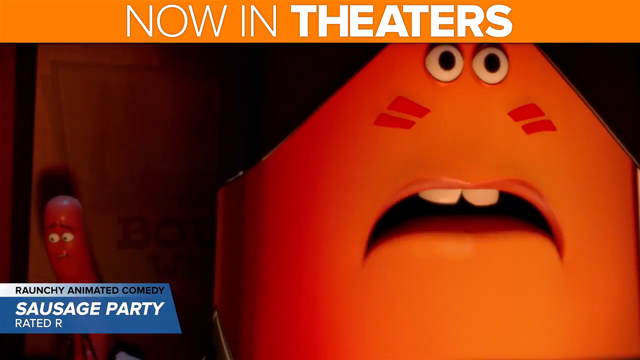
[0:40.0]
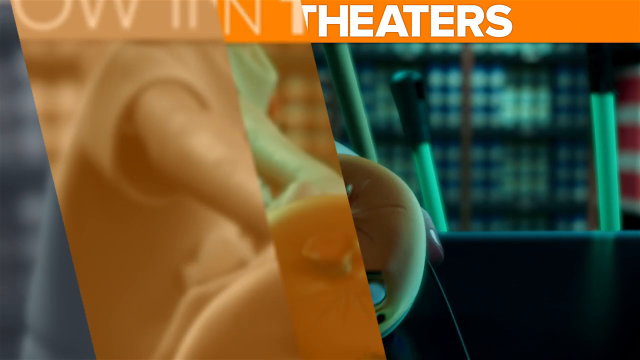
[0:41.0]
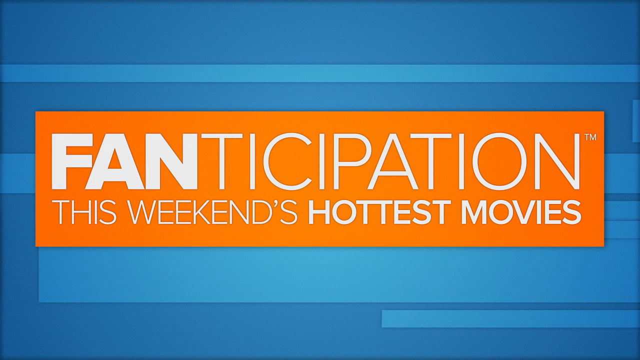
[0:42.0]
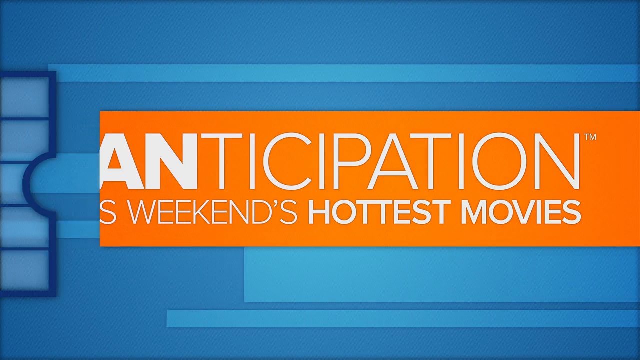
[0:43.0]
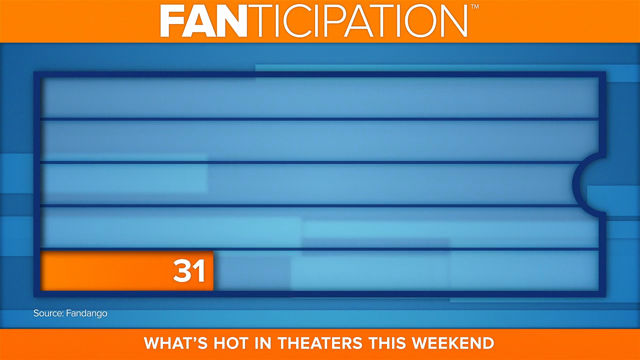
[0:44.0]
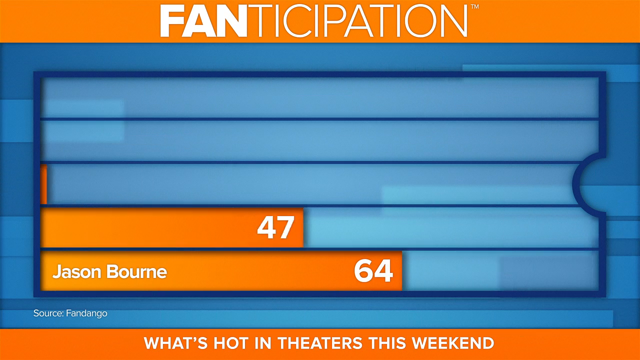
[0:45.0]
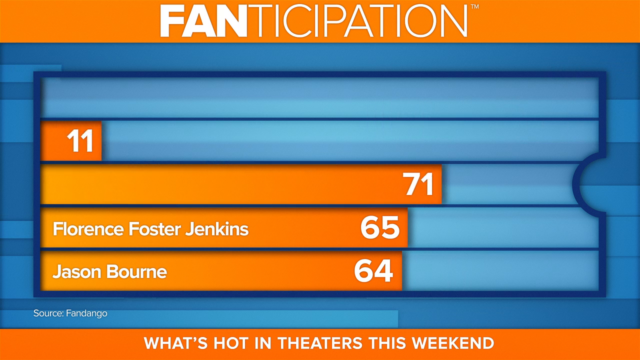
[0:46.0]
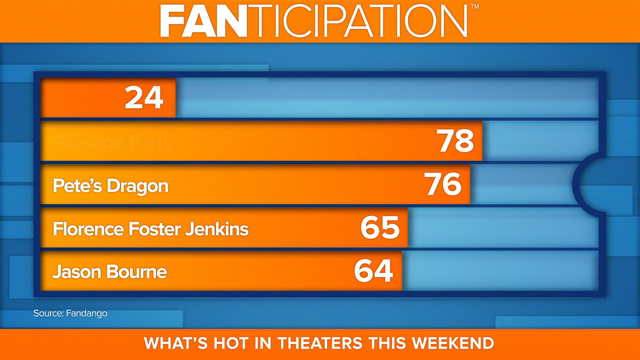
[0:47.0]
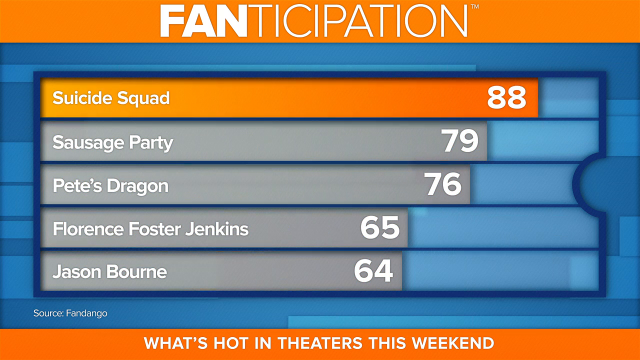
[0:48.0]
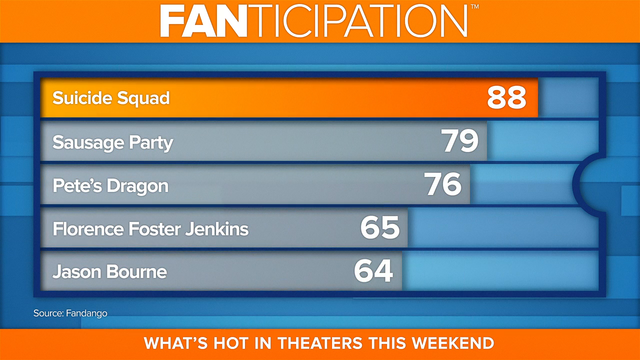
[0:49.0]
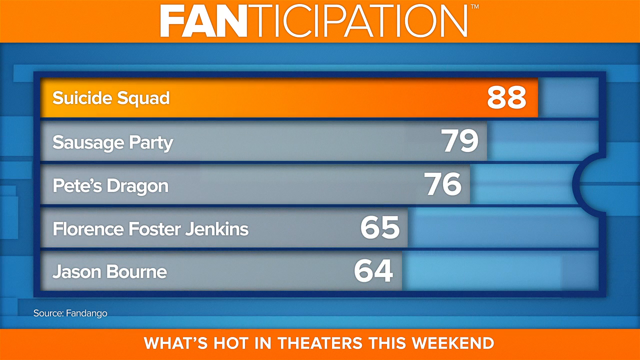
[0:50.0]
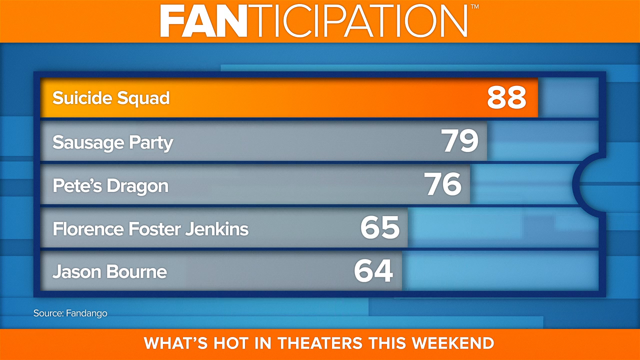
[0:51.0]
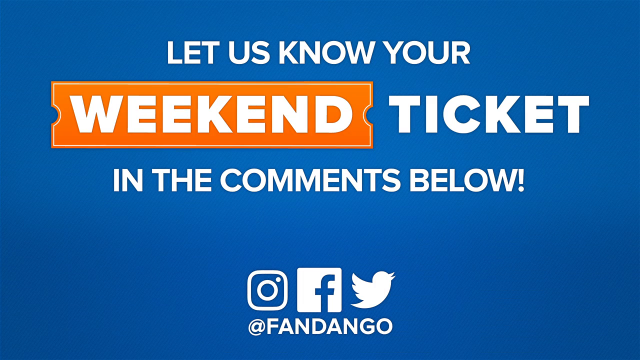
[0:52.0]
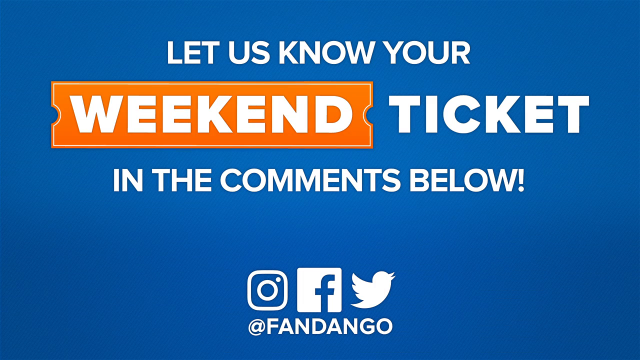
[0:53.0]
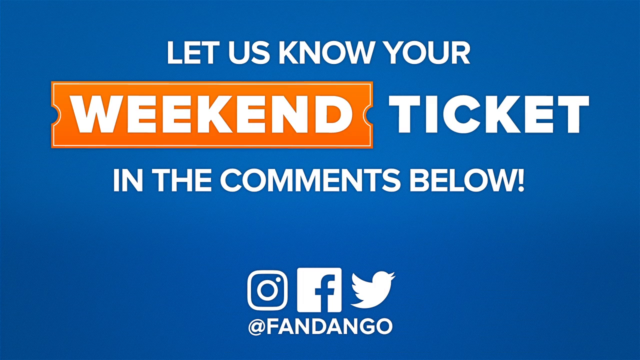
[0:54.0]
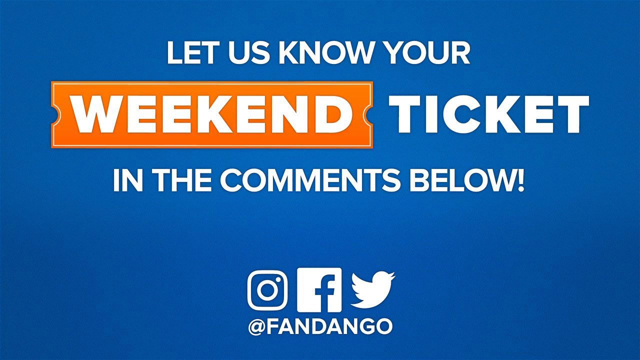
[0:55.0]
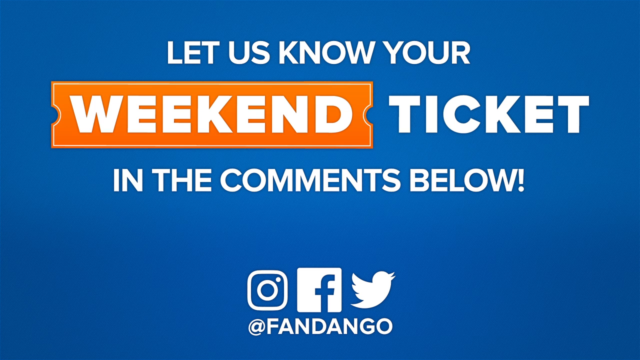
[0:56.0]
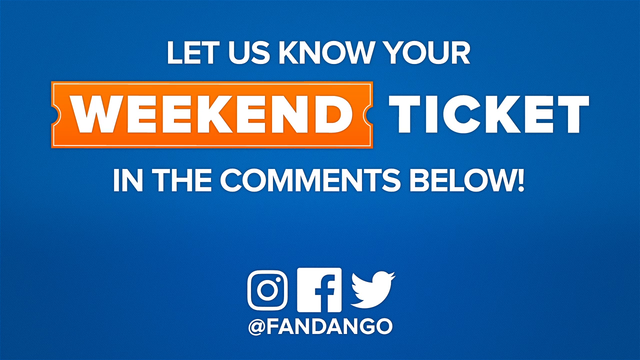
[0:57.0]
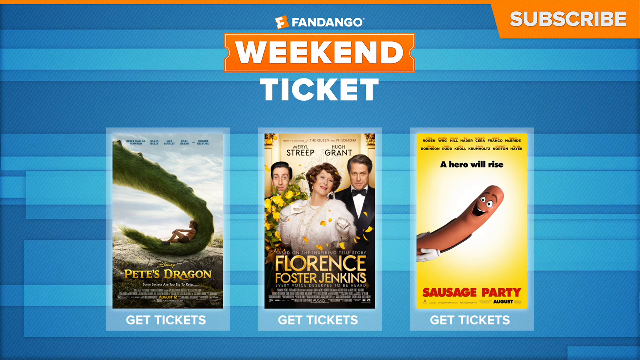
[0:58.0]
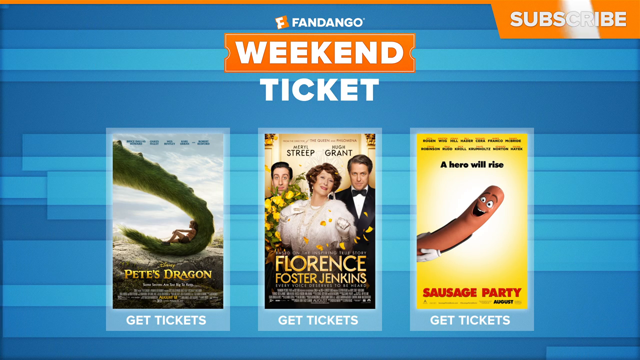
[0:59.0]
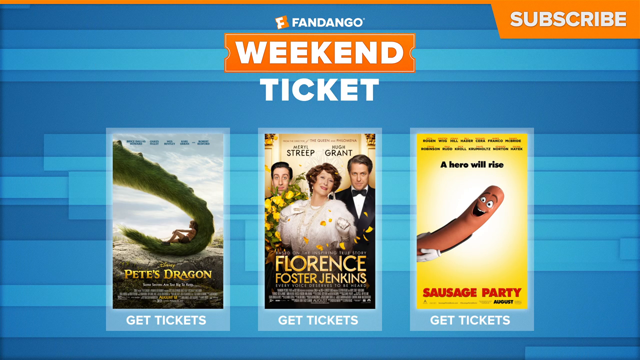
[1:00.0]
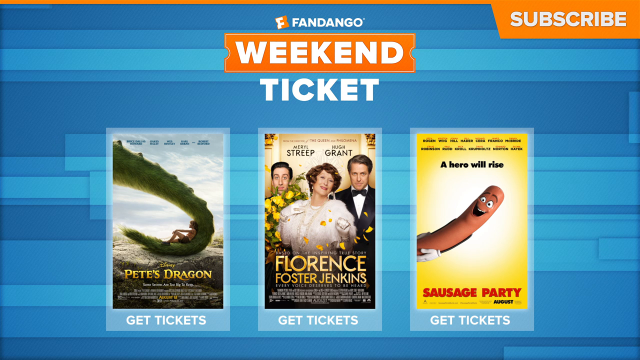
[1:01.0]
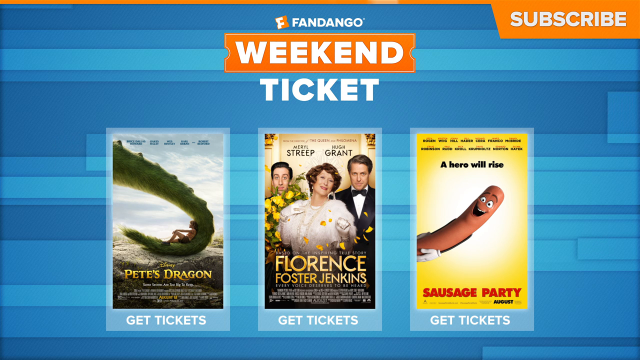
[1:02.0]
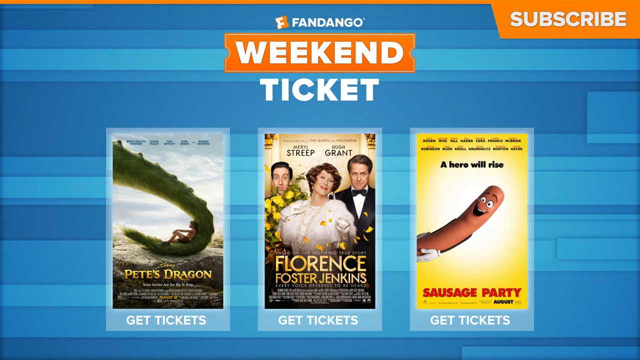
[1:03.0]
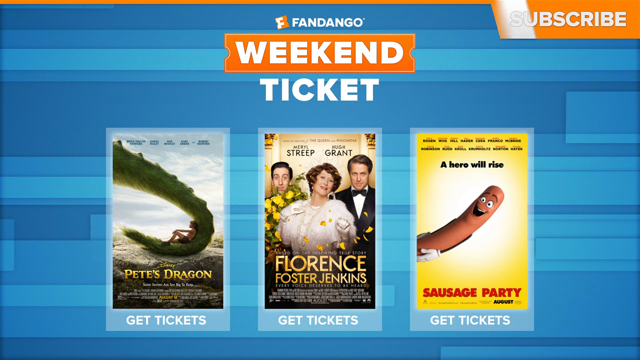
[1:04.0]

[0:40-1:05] Something that looks like a playlist of movies appears. At the top it says "a Fanticipation." The first movie listed is "Suicide Squad," the second "Sausage Party," the third "Pete's Dragon," the fourth "Florence Foster Jenkins," and the last "Jason Bourne." At the bottom it says "what's hot in the theaters." It appears to be a list of movies showing in theaters, and the video seems to be an advertisement, since at the end it says "weekend ticket."